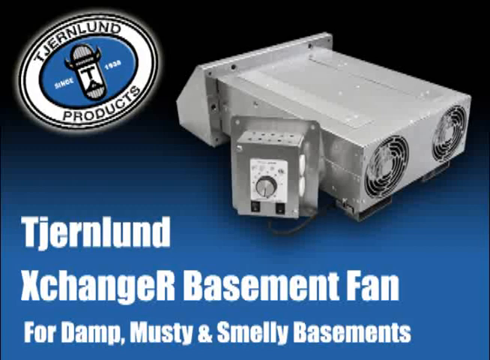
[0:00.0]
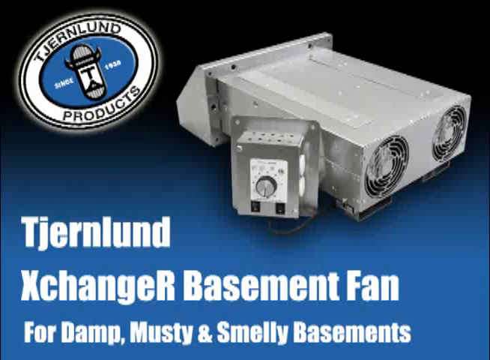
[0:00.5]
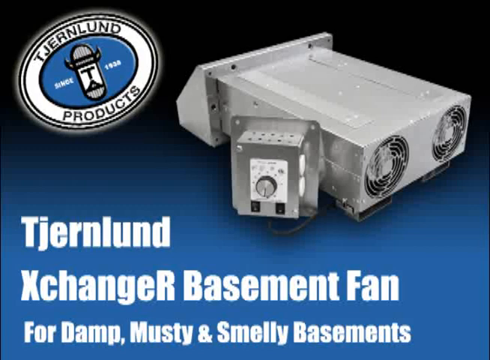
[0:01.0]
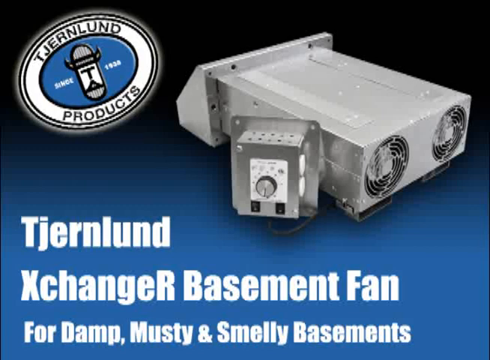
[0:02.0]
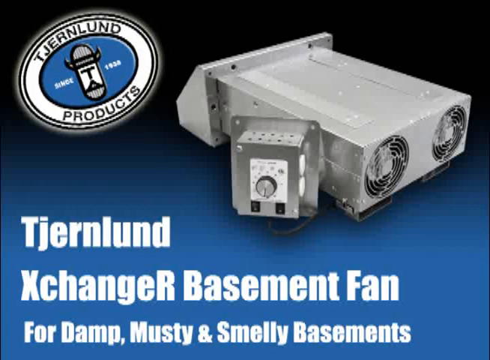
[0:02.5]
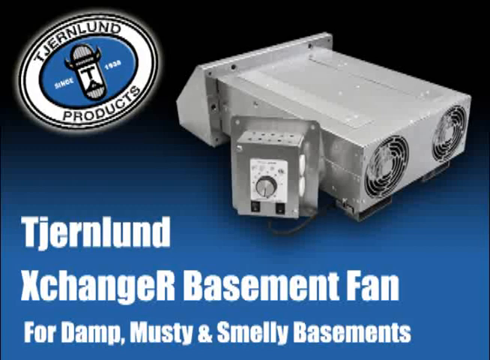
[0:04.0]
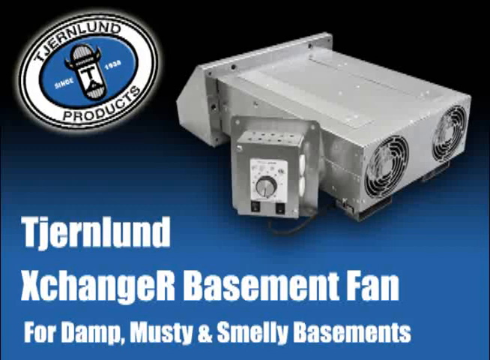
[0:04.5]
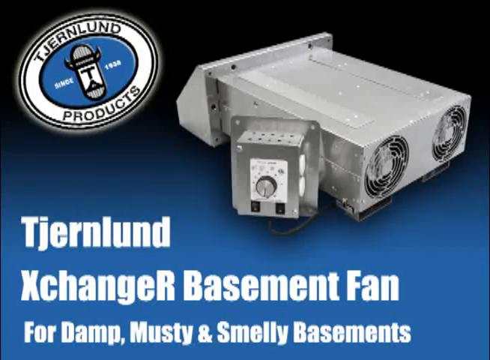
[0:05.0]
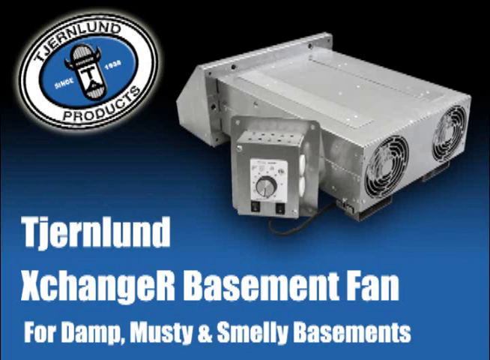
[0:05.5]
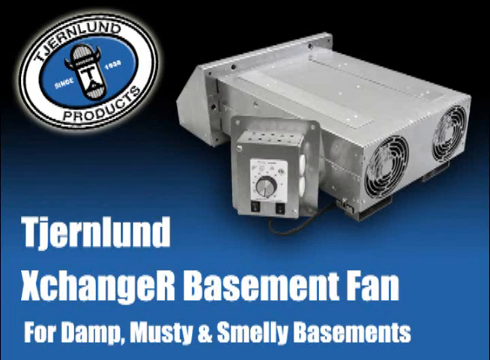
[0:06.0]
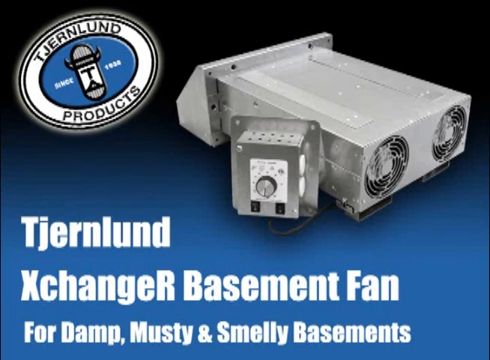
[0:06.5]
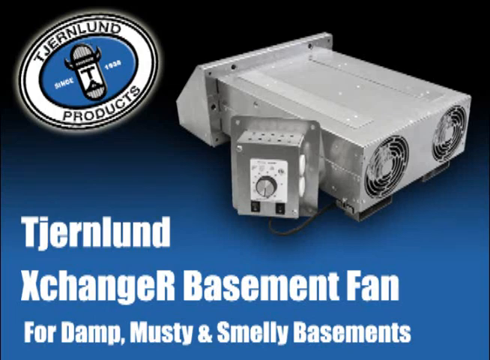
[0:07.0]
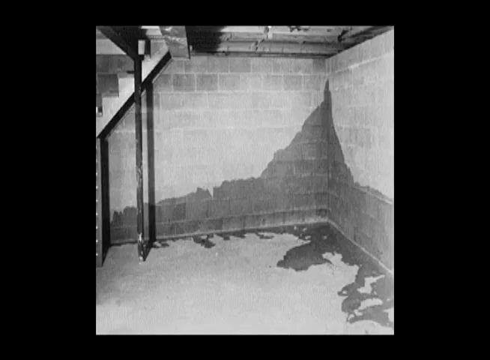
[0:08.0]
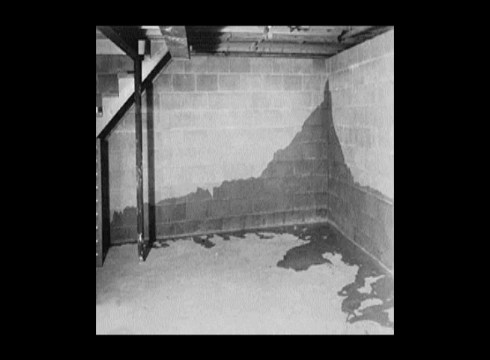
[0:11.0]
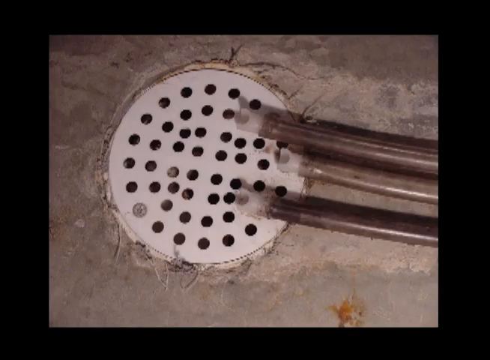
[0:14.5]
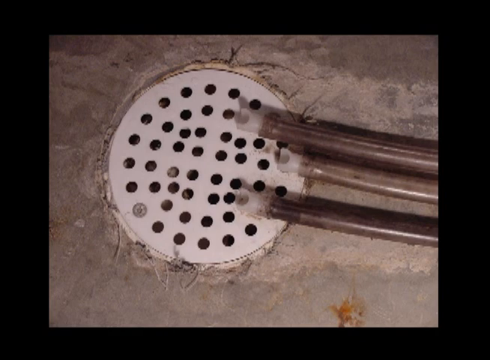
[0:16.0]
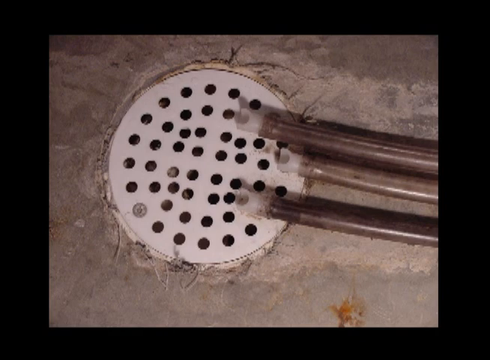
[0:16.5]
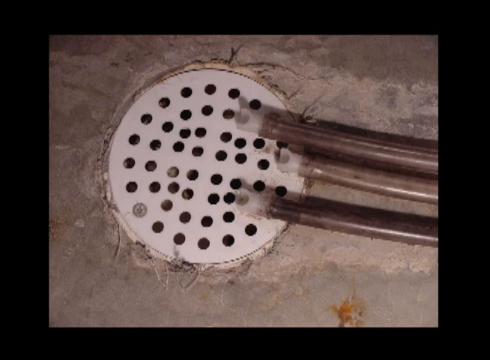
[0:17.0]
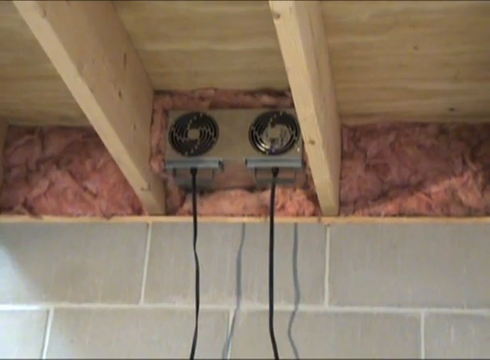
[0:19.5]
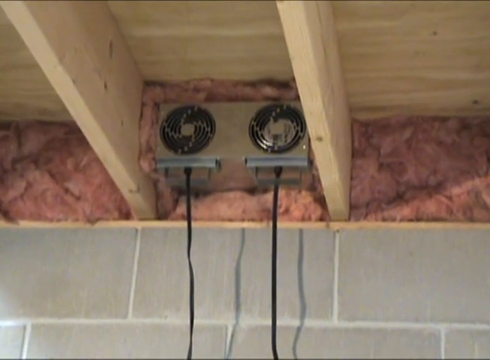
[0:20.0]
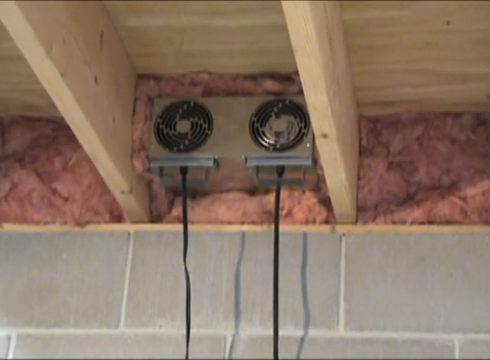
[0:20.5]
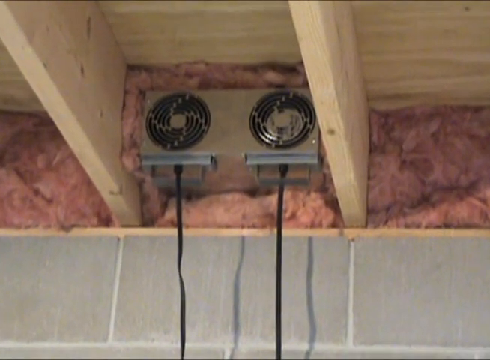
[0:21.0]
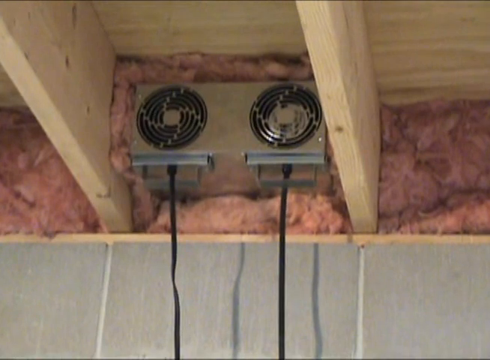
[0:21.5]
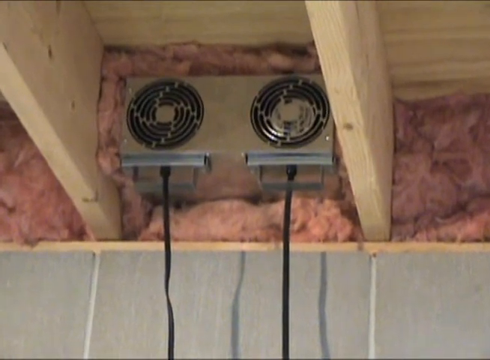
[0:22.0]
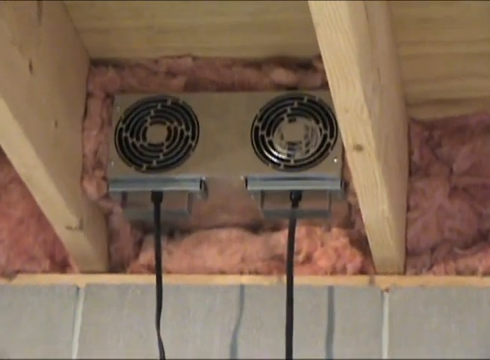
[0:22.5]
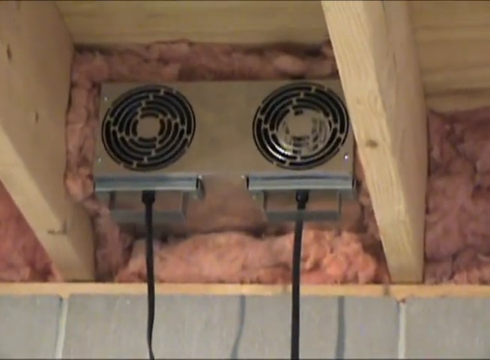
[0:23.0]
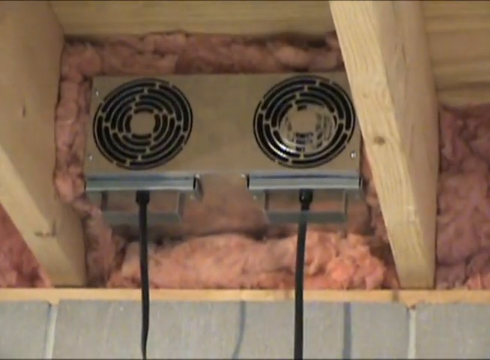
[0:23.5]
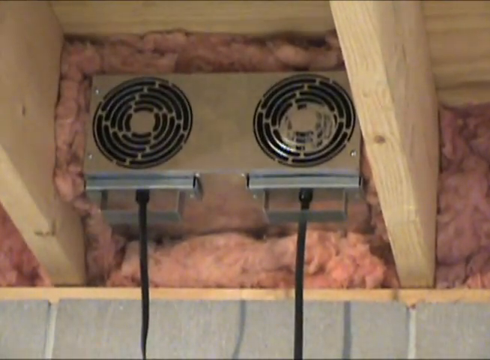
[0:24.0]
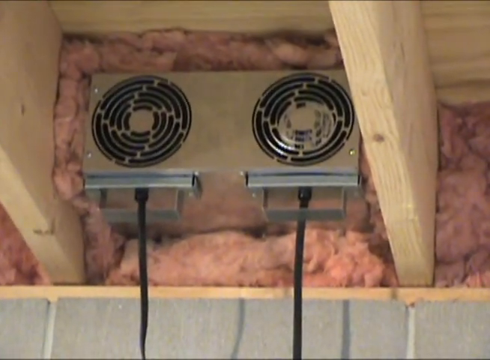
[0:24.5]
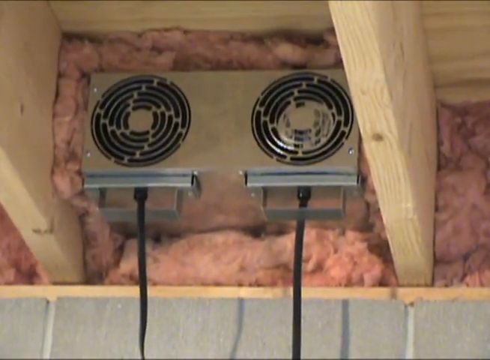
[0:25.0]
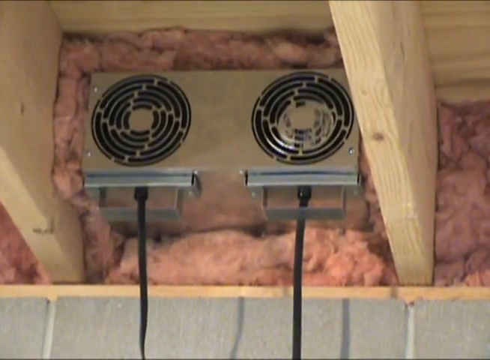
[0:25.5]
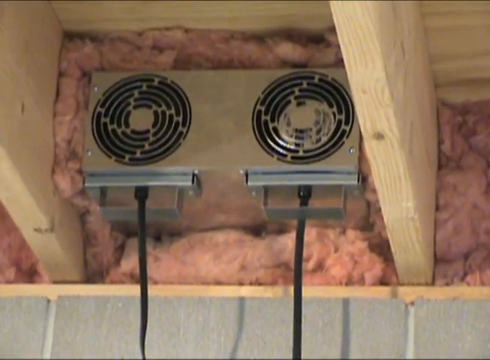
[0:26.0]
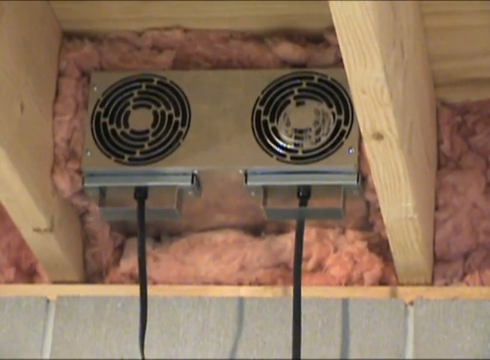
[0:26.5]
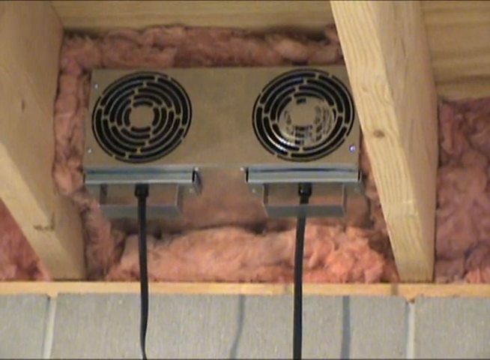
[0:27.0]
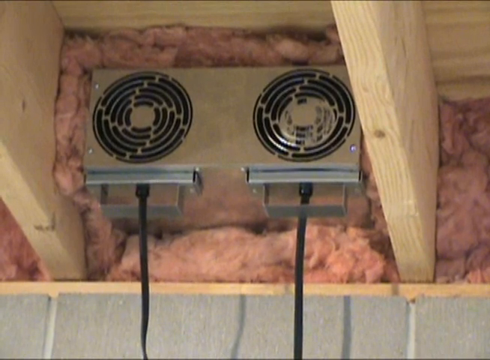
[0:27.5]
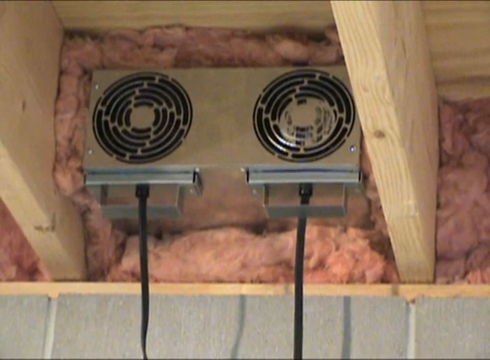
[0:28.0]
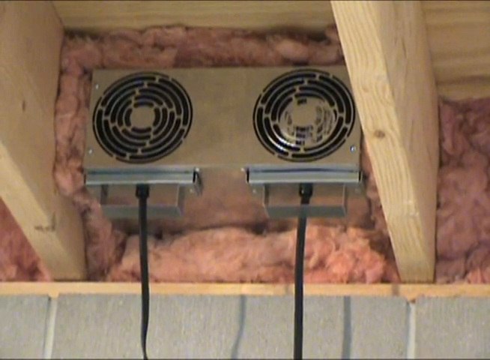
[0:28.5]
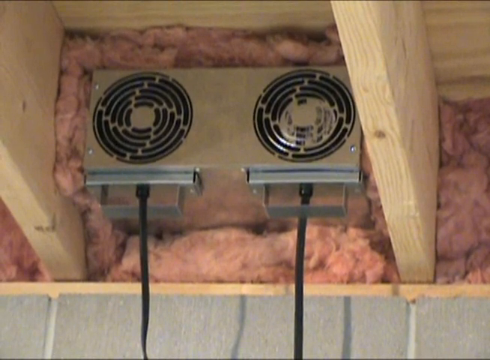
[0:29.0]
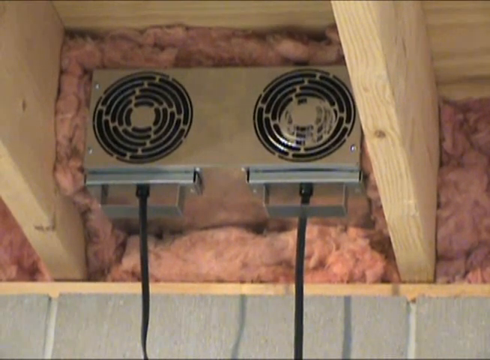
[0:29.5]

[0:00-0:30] The video is about the Tjernlund XchangeR basement fan. In the top left is an oval logo: a white circle with a blue circle inside it reading "Tjernlund products since 1928", with a white and grey oval graphic in the middle containing a "T". To the right of the logo is a metal oblong case, presumably a basement fan. On its back are two circular grills with fans behind them, and in front of the rectangular fan unit is a control dial in a metal box: a rotary dial for setting the fan speeds. The caption at the bottom of the screen, in white text on a blue background, reads "Tjernlund XchangeR Basement Fan for damp musty and smelly basements". The video moves to a black-and-white picture of a basement's breeze block wall with obvious damp patches and water seeping out onto the concrete floor, which has water on it; a staircase is visible on the left of the picture and some pipes at the top. The picture changes to a round drain cover with circular holes in it on a concrete floor, with some pipes on top of it. Next come the wooden rafters at the top of the basement, with some pink fiberglass insulation and a rectangular fan unit with two circular grills and two electrical cables leading to the unit.